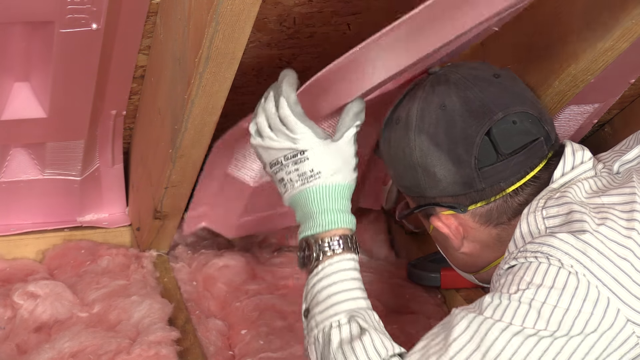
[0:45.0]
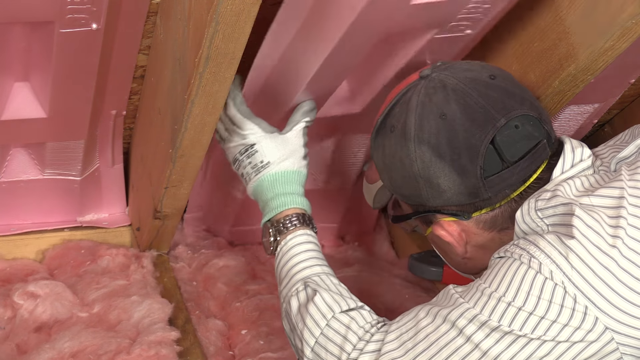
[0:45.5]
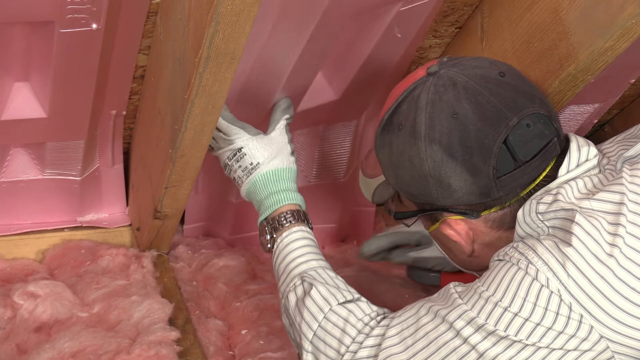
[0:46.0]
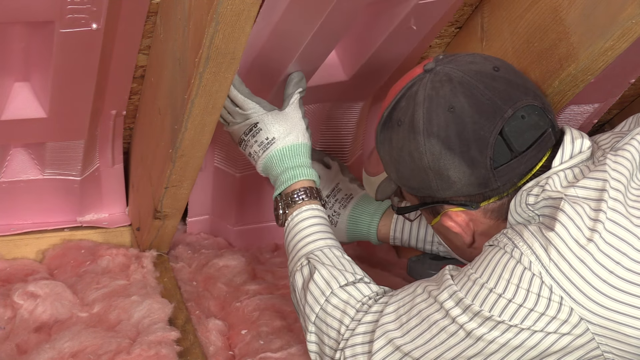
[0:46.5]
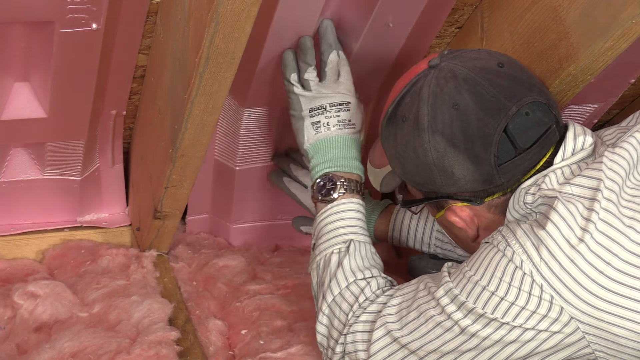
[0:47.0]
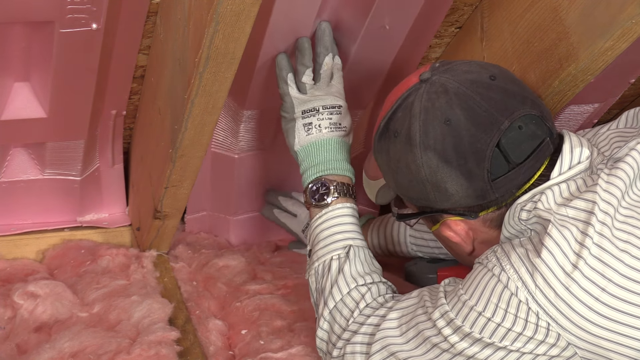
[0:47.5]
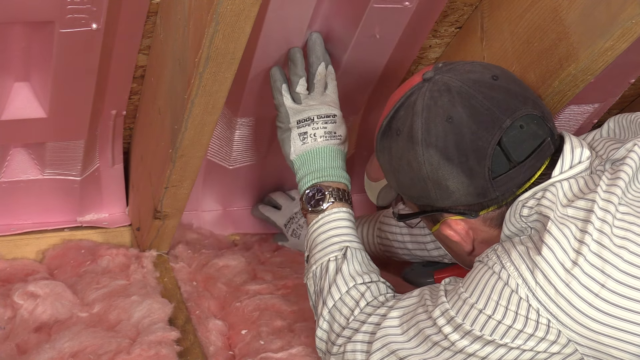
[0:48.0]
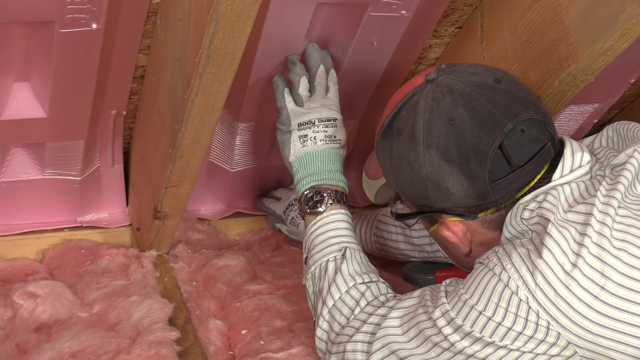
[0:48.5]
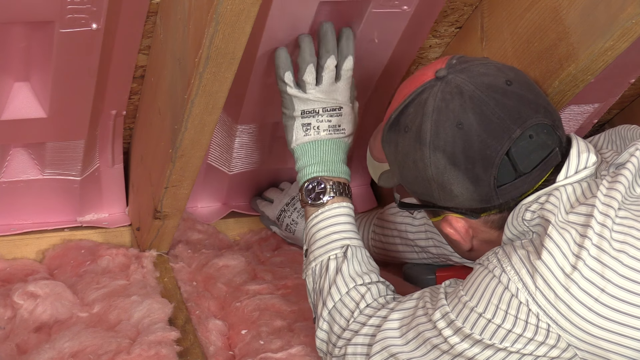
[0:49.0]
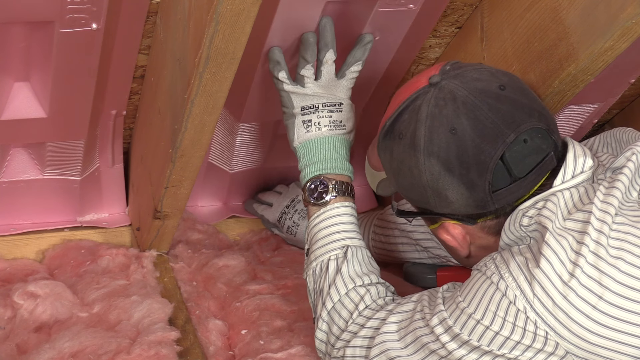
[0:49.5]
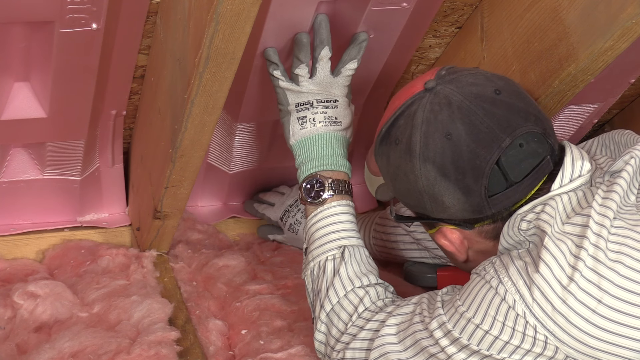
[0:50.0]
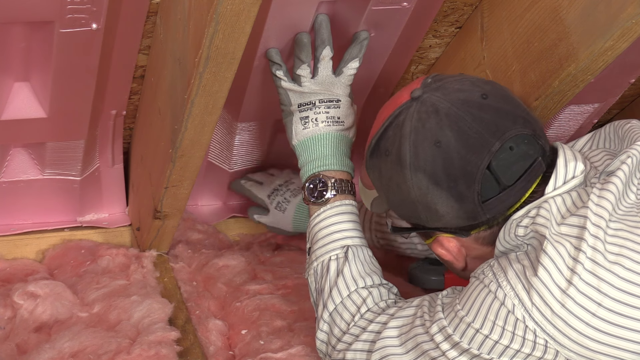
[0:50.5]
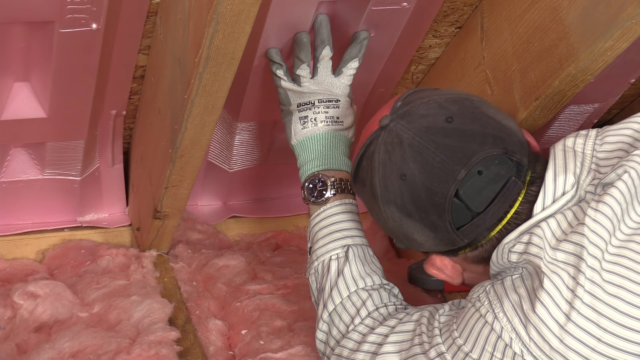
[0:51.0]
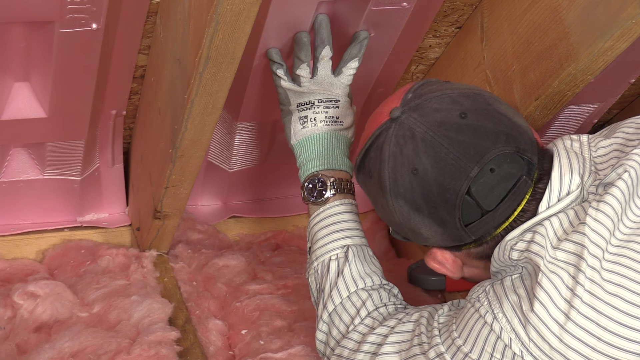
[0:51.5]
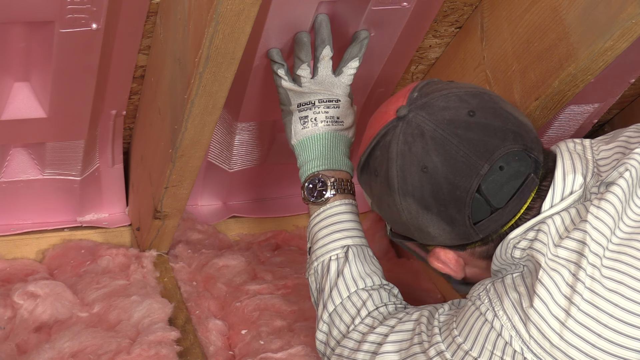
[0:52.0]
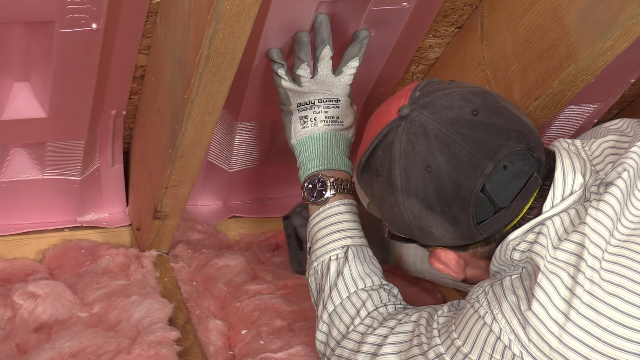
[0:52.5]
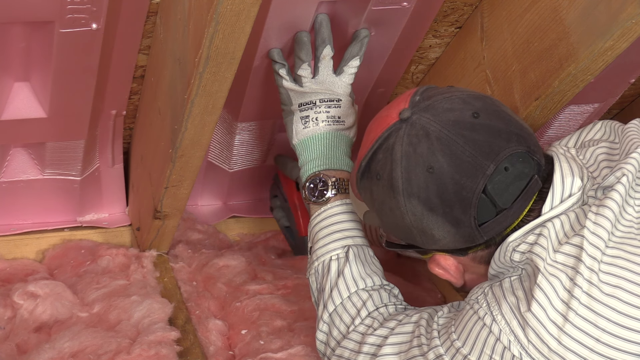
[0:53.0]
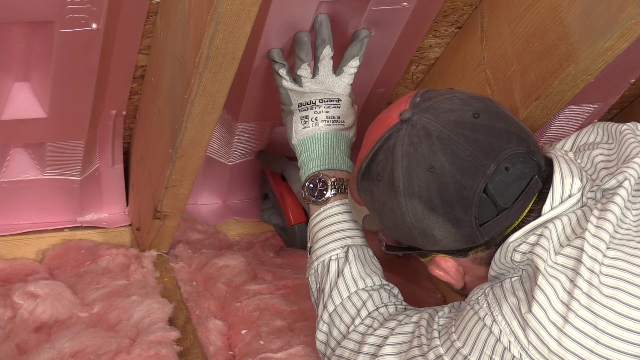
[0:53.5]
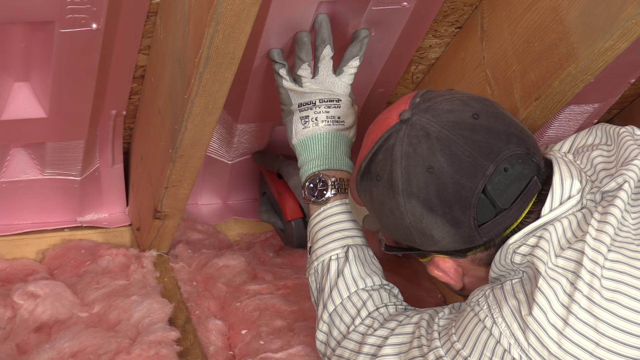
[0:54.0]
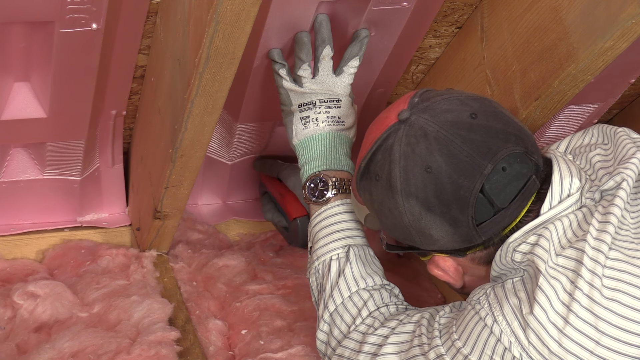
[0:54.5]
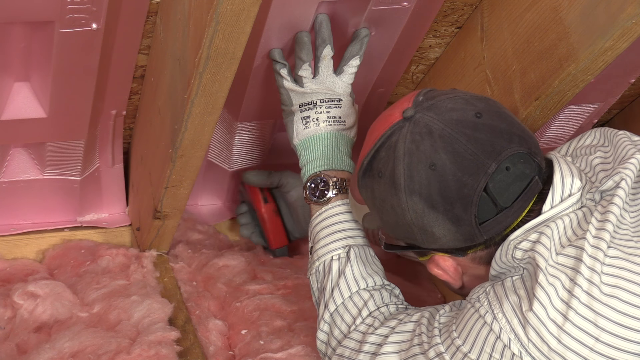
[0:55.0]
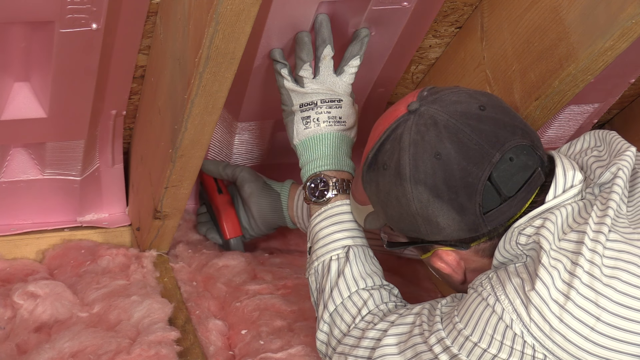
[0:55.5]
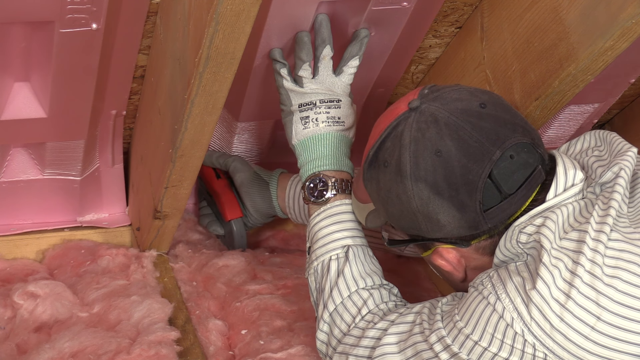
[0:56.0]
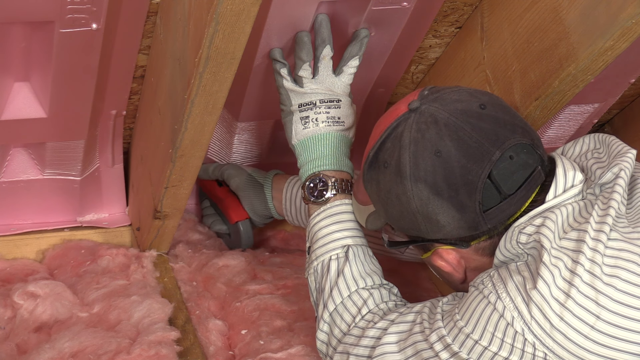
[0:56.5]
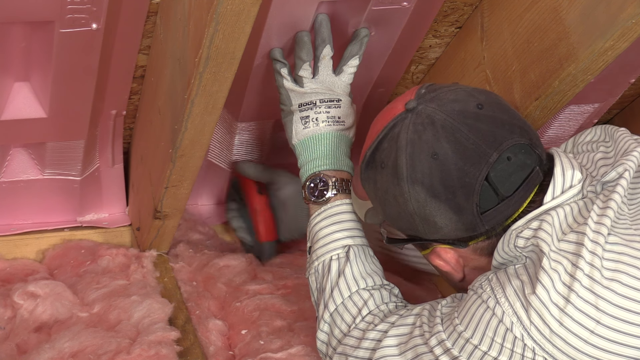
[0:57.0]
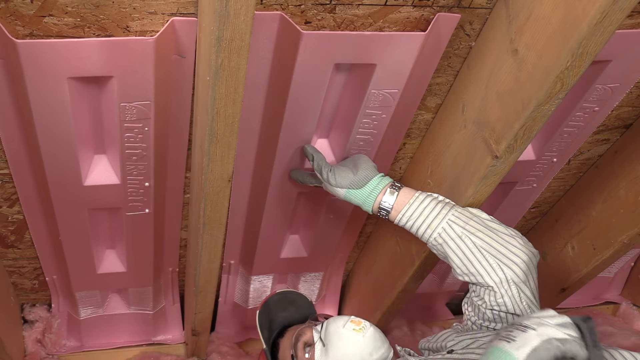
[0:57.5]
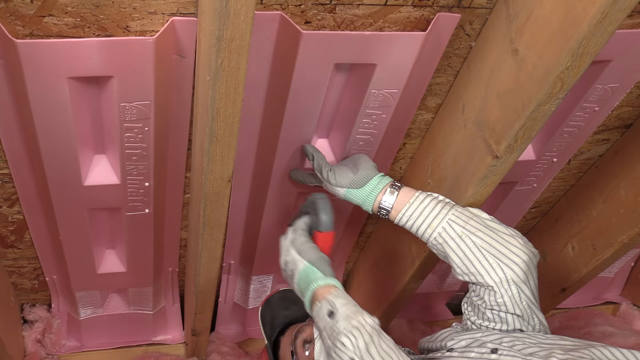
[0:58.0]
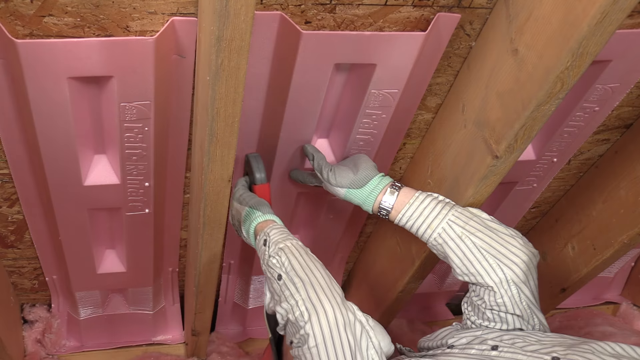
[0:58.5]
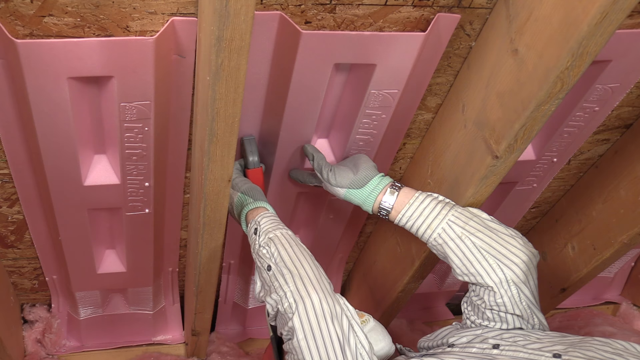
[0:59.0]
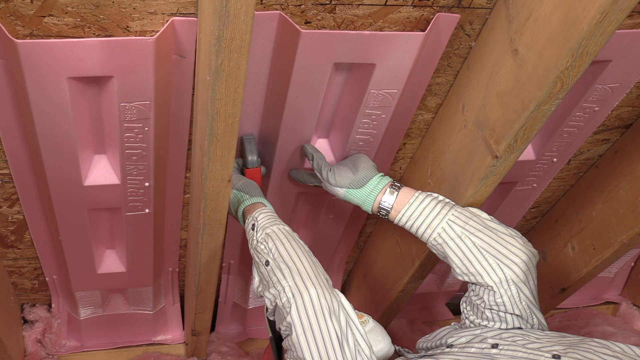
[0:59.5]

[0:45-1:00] A close-up shows the back of the man's head, a little of the top of his back, and mostly his left arm, while he uses his right arm. He comes into view from the right-hand side, mainly the lower right, working above pink insulation that is underneath his arm as he leans over; he could be lying down. He picks up a pink, shiny piece of material and staples it against the wall above the insulation, apparently on the slanted interior part of the roof between some parallel boards. At first he is leaning over as if lying on his stomach, stapling at the bottom of the material, and he has a watch on. Then the scene changes and he is lying on his back, still coming in from the lower right, holding the pink material in place and stapling it higher up.